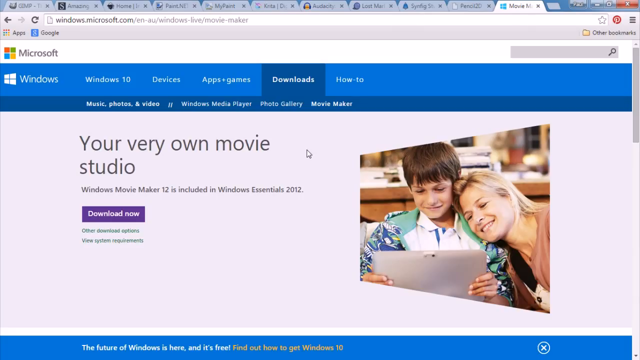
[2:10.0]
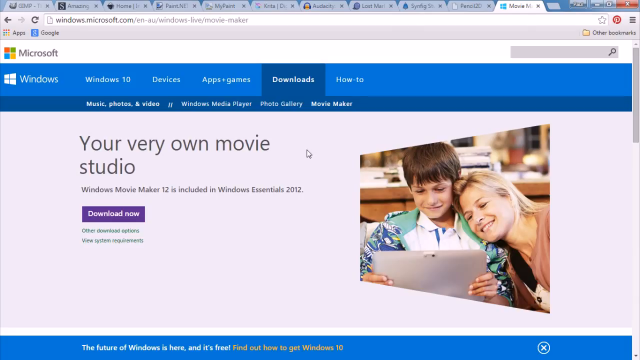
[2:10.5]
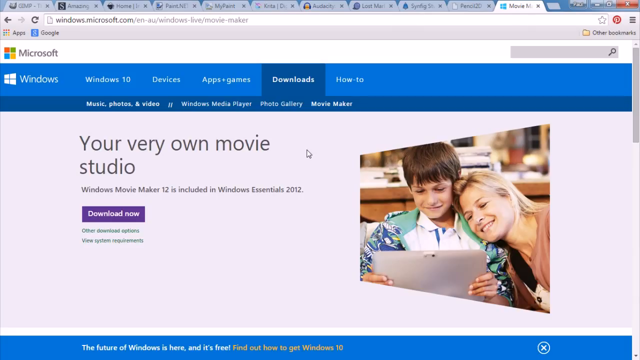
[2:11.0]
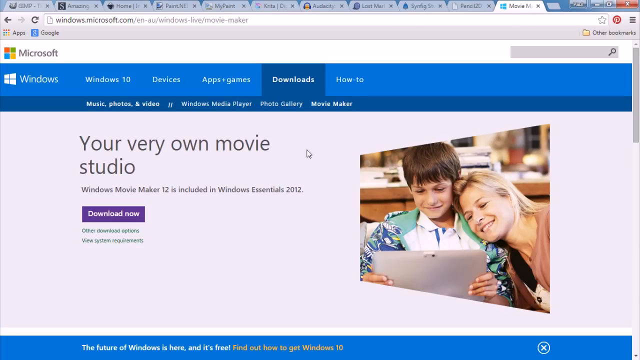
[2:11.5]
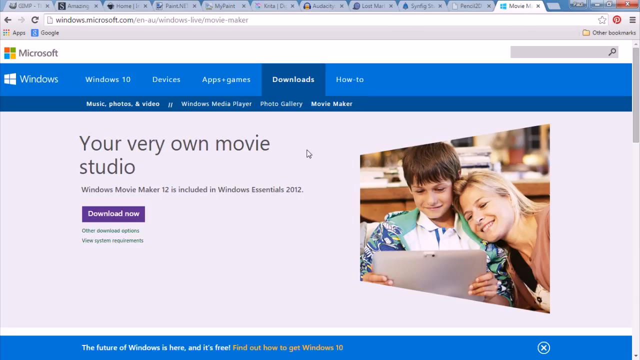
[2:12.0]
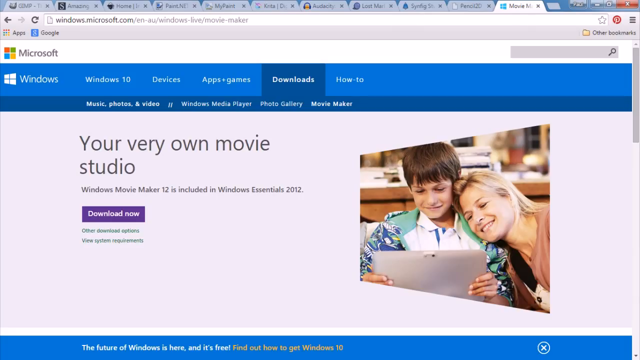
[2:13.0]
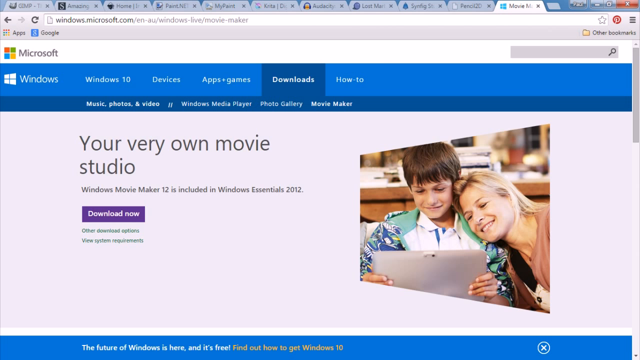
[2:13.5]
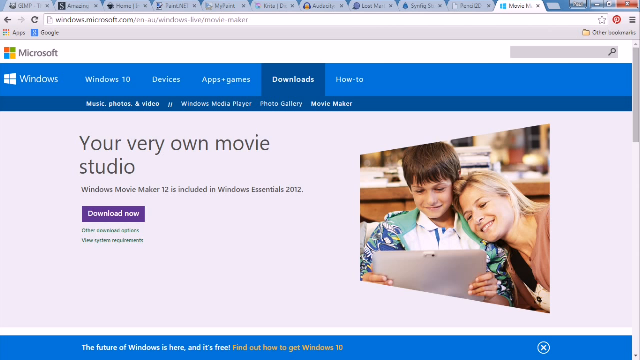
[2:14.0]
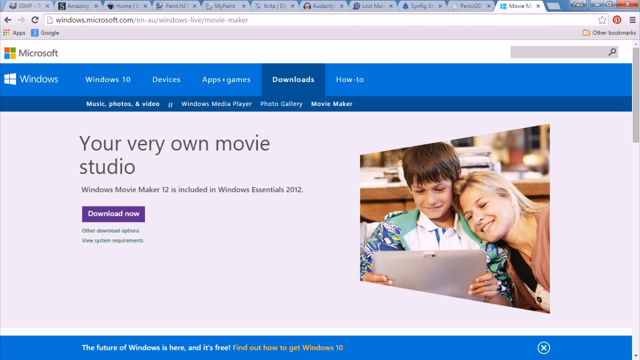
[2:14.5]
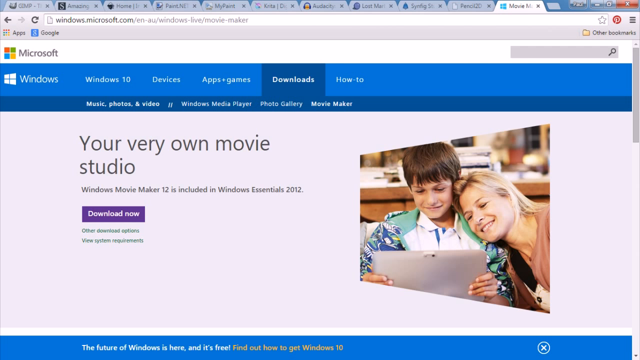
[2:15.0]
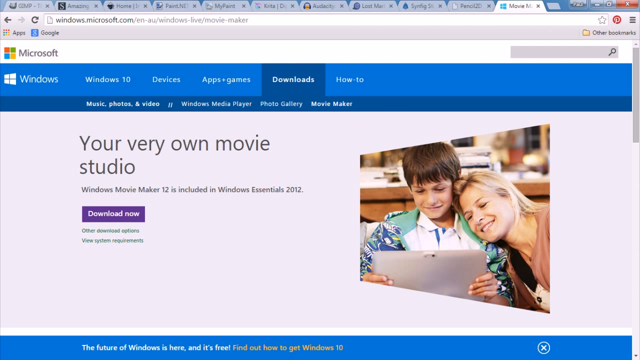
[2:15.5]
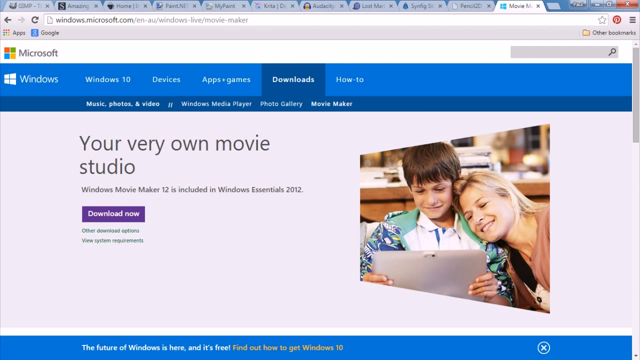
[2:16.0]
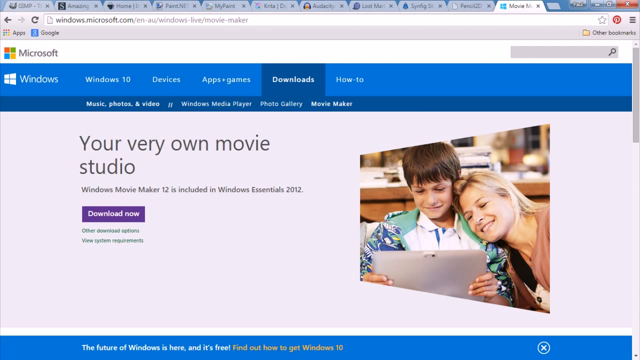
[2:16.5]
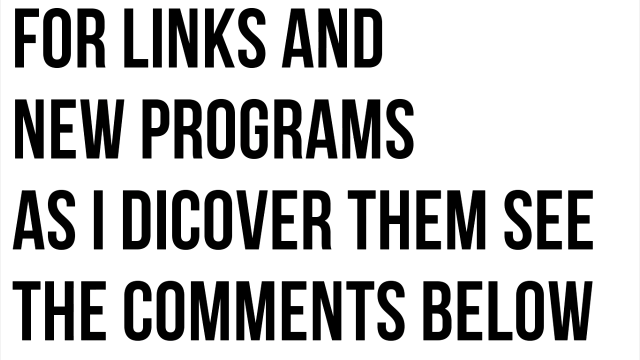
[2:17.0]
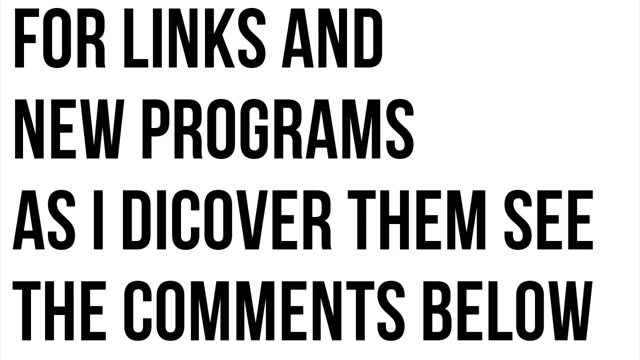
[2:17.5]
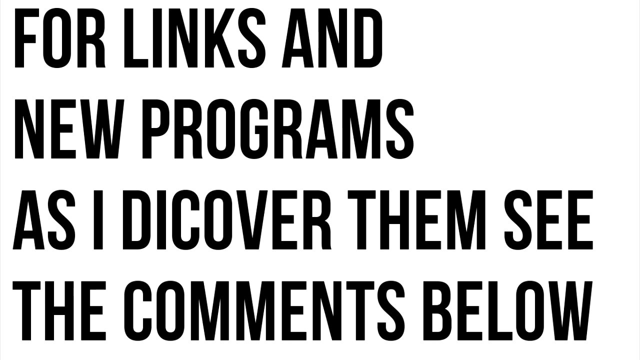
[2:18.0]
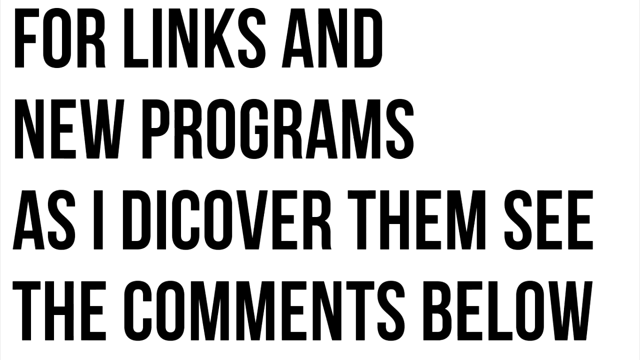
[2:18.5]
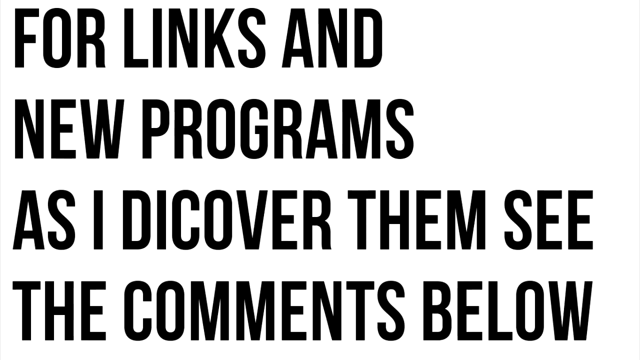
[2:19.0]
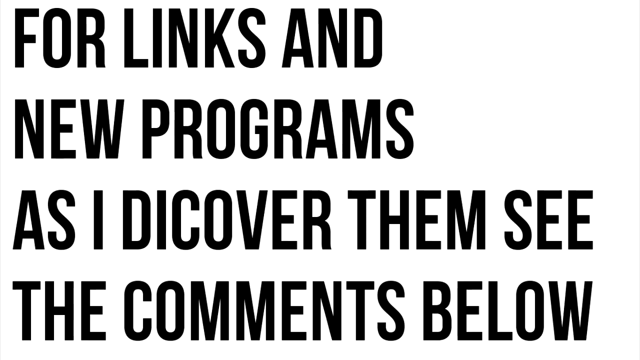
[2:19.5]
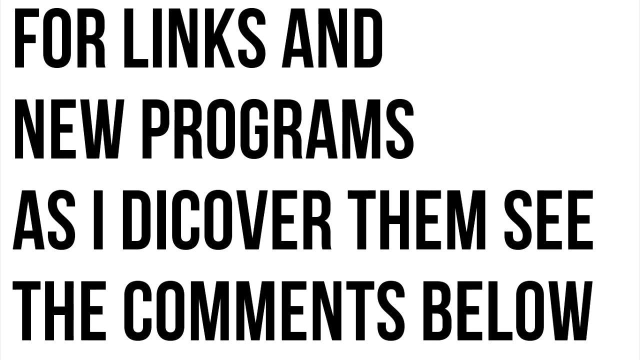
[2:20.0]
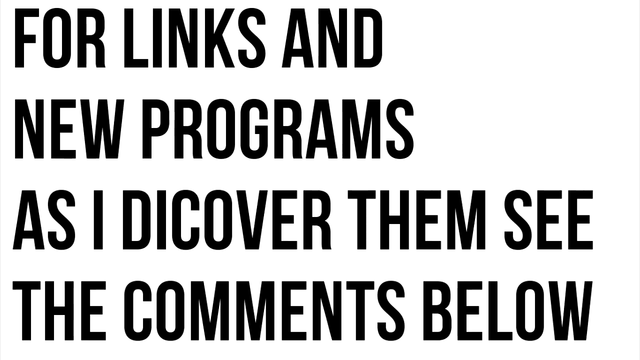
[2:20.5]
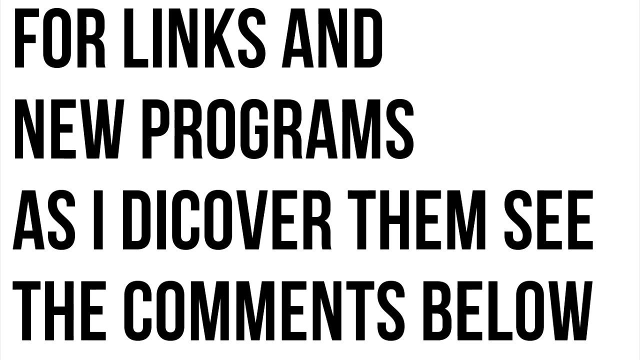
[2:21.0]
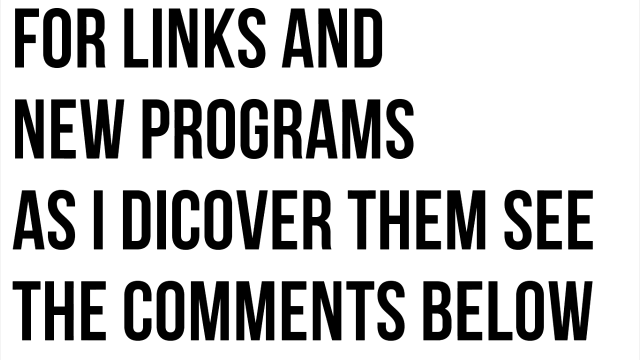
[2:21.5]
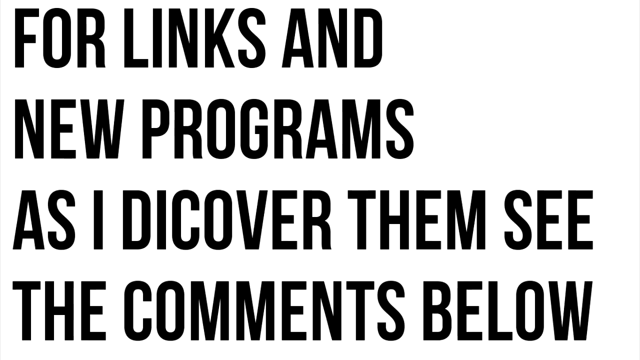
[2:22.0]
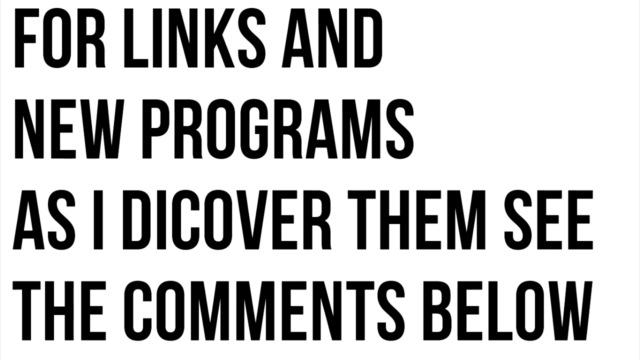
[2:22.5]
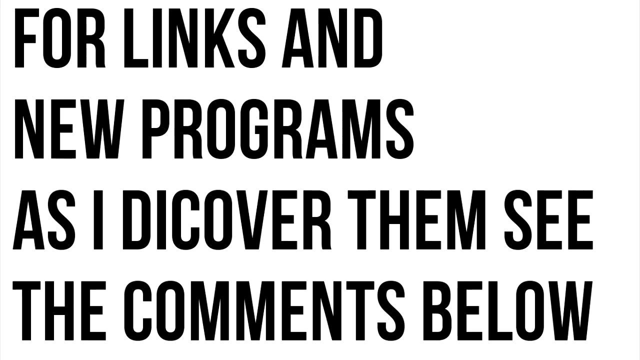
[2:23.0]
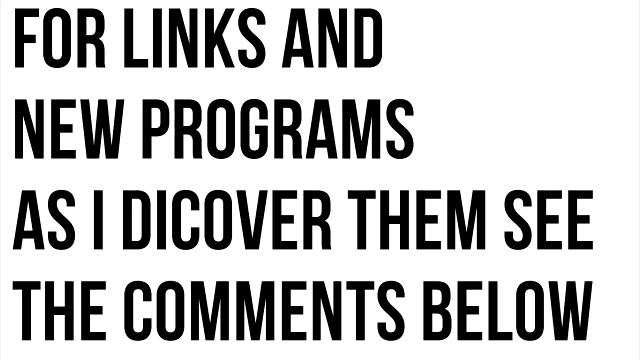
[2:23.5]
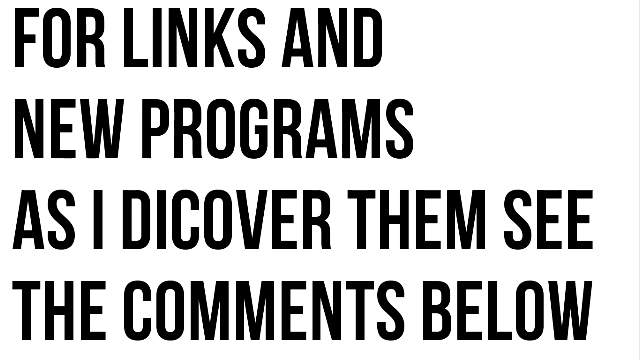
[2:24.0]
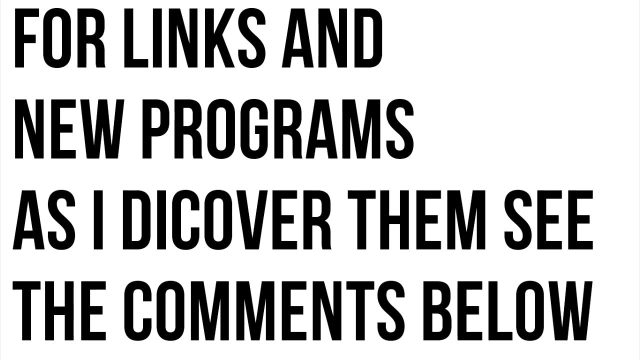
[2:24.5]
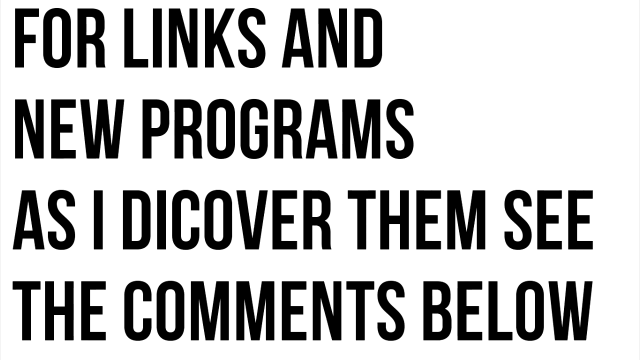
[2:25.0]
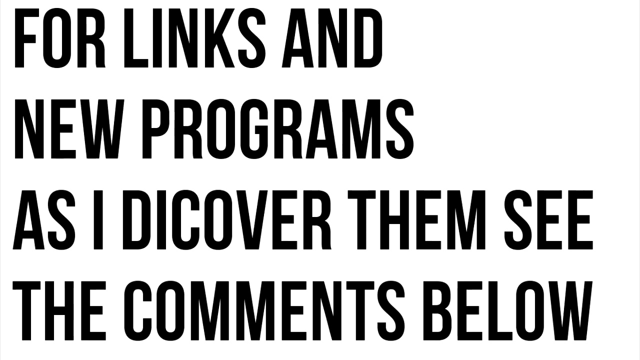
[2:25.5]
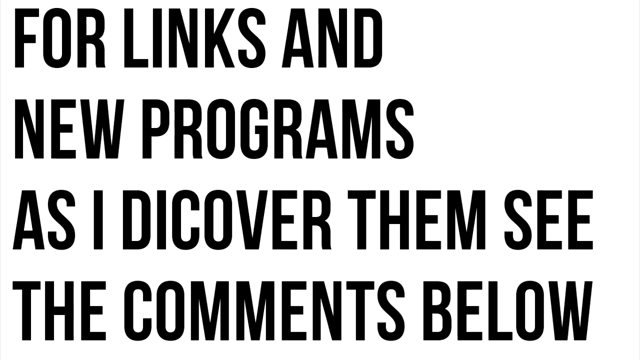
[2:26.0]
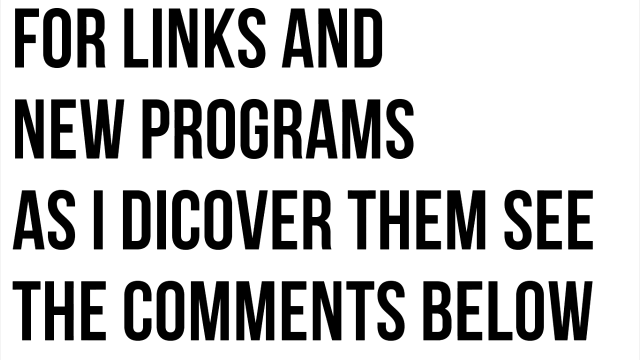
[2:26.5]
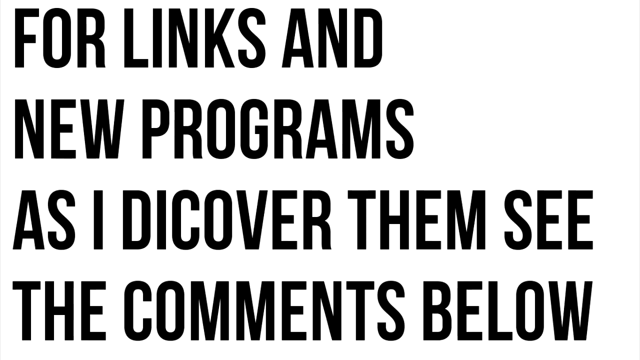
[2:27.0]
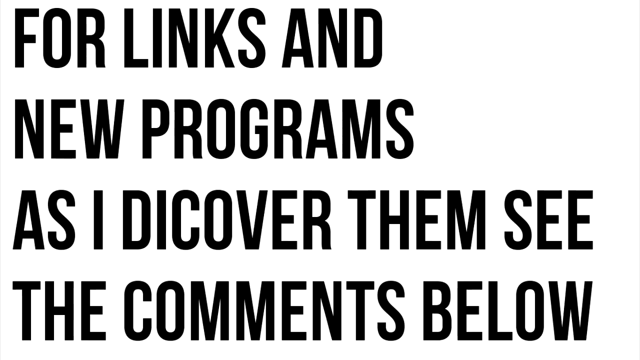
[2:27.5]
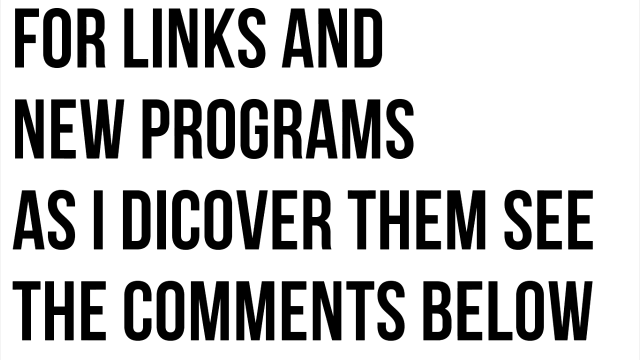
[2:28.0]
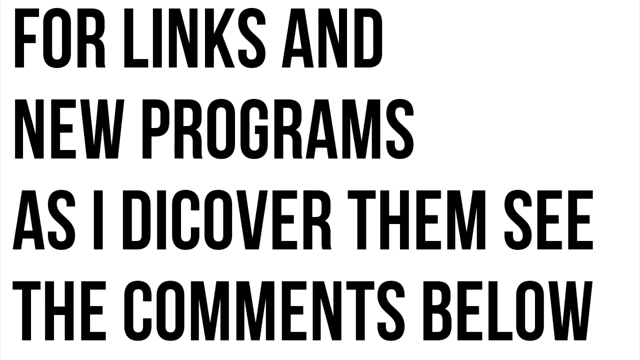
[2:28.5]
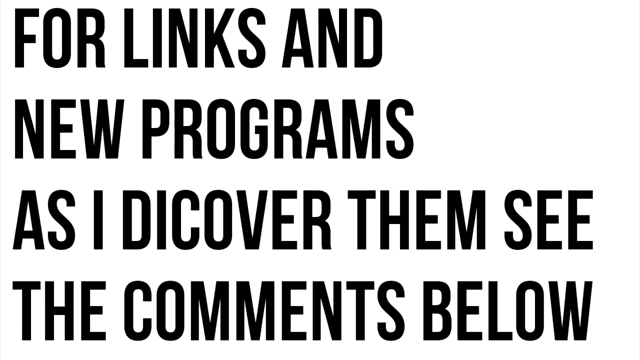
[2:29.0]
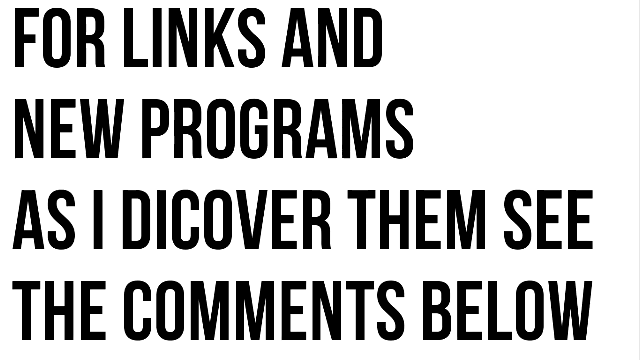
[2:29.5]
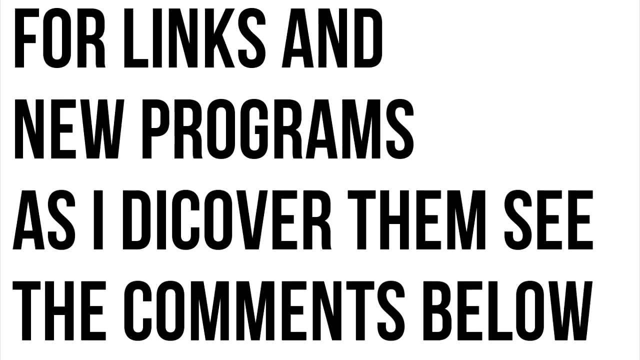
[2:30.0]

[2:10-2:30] The last tab, windows.microsoft.com, is still open. "Microsoft" appears at the top right with a four-box logo: one red box, a green one next to it, a yellow one beneath the green, and a blue one next to the yellow. The menu reads "Windows 10," "devices," "apps," "downloads" (the section currently open) and "how to." The page reads "your very own movie studio" and "Windows Movie Maker 12 is included in Windows Essentials 2012, download now." The page stays up for some time, then the background turns white and then black. On the left side, text across several lines reads "for links new program as I discovered them, see the comments below."